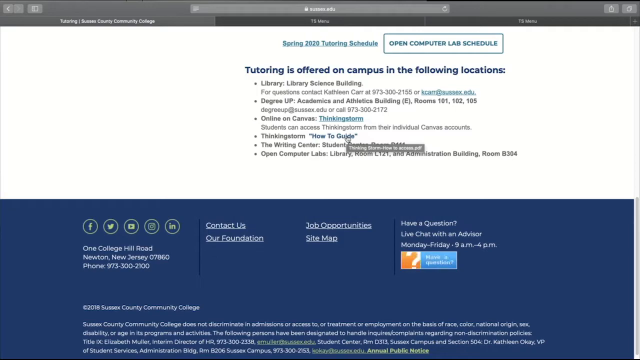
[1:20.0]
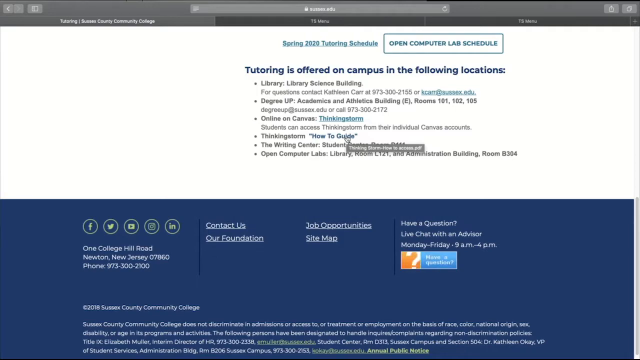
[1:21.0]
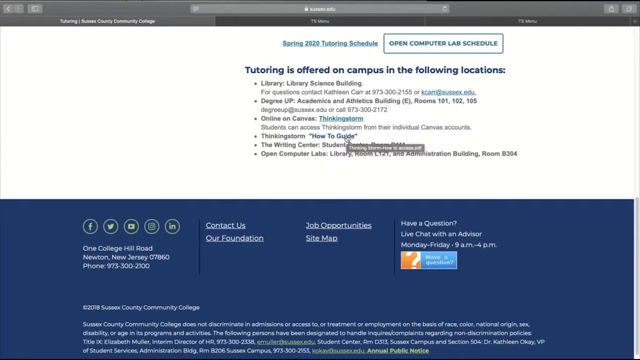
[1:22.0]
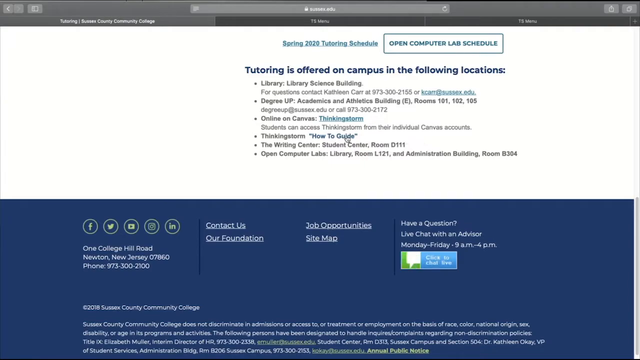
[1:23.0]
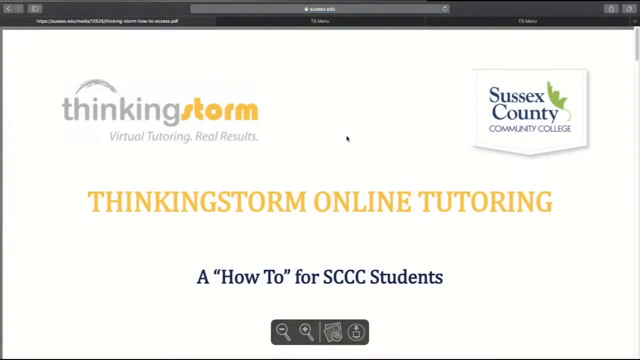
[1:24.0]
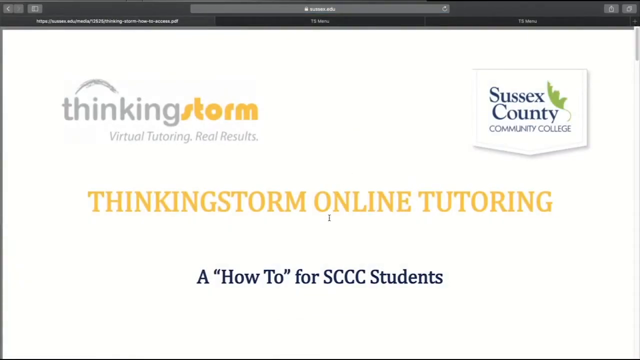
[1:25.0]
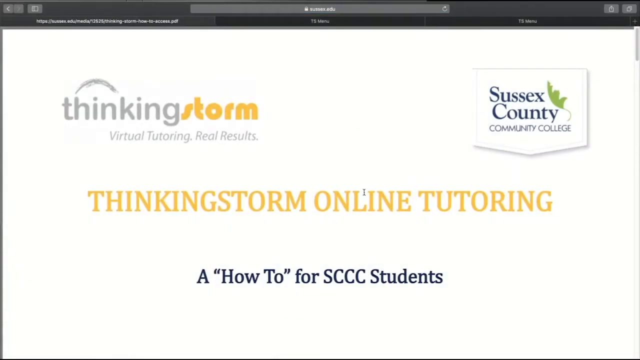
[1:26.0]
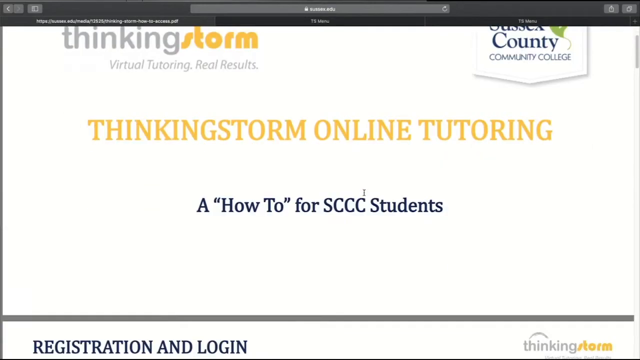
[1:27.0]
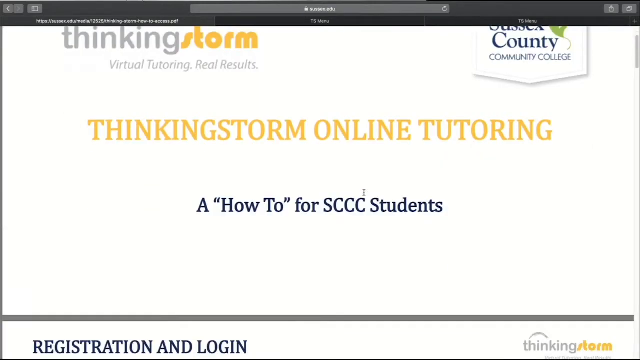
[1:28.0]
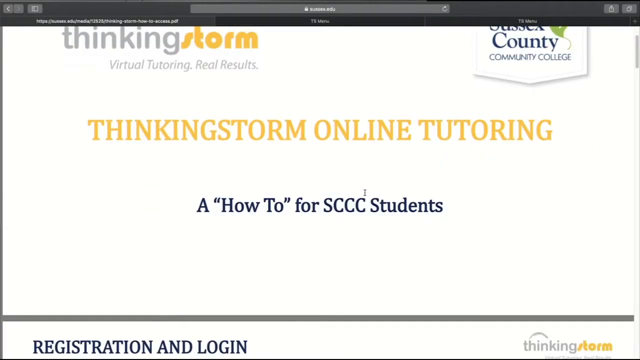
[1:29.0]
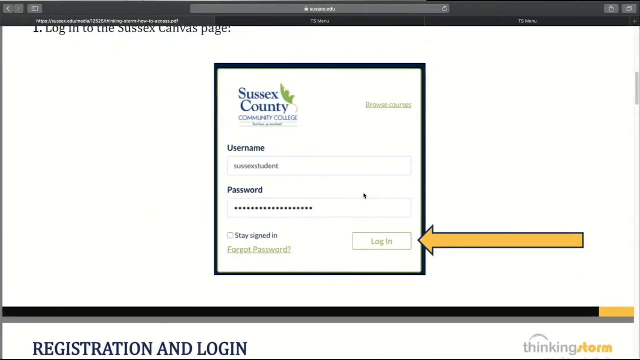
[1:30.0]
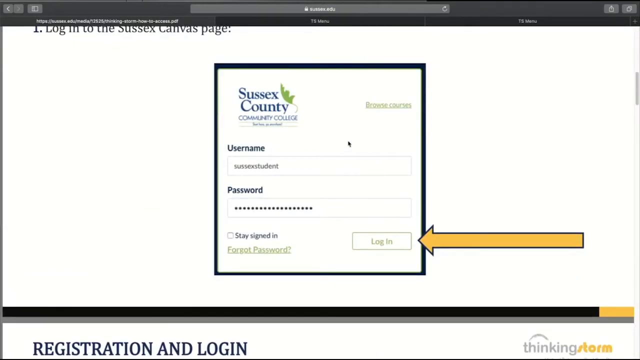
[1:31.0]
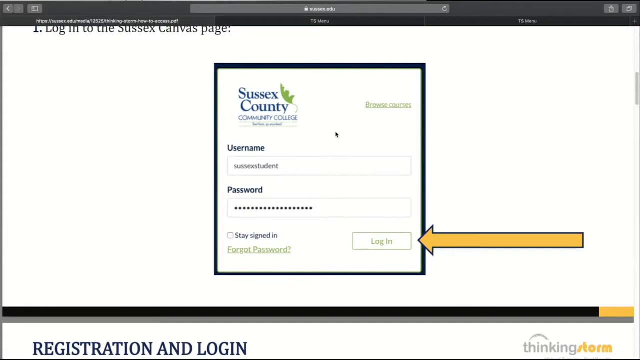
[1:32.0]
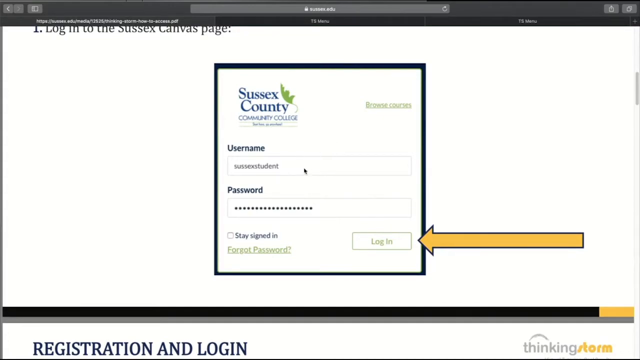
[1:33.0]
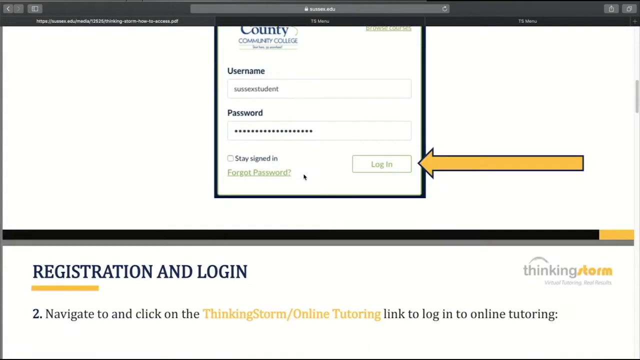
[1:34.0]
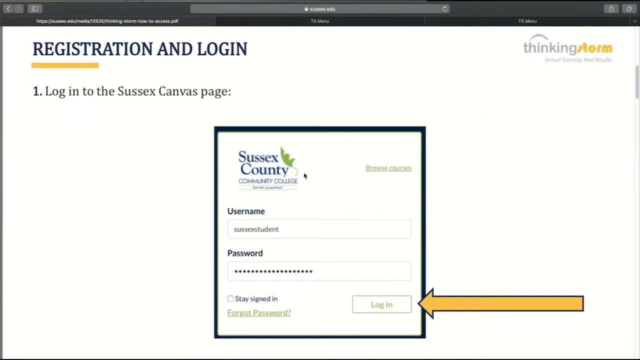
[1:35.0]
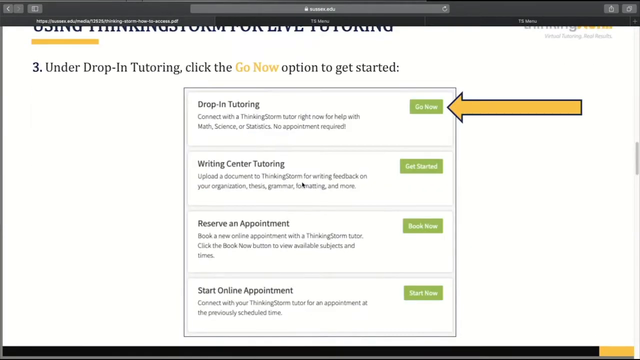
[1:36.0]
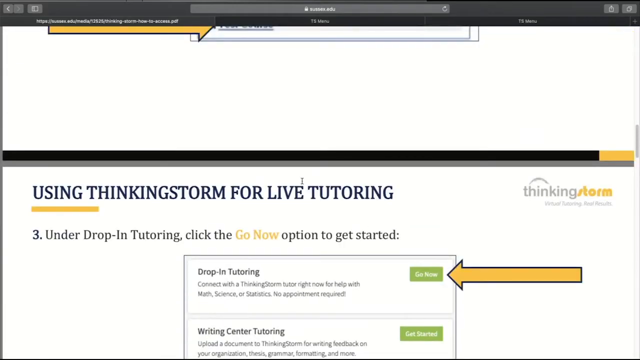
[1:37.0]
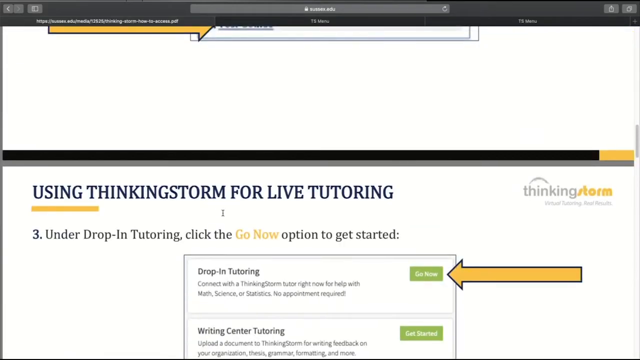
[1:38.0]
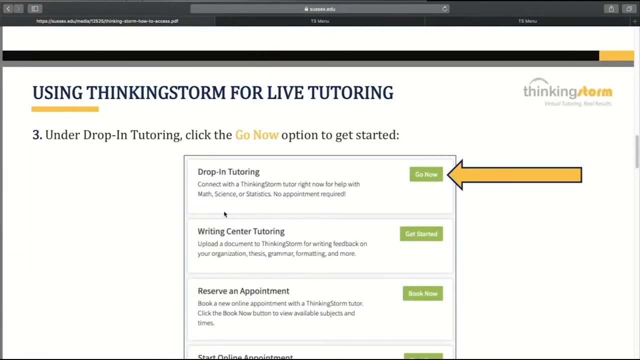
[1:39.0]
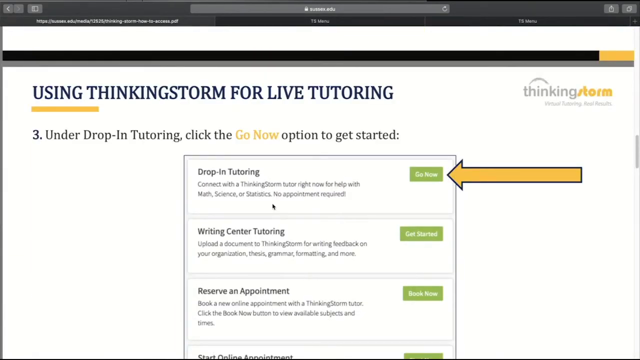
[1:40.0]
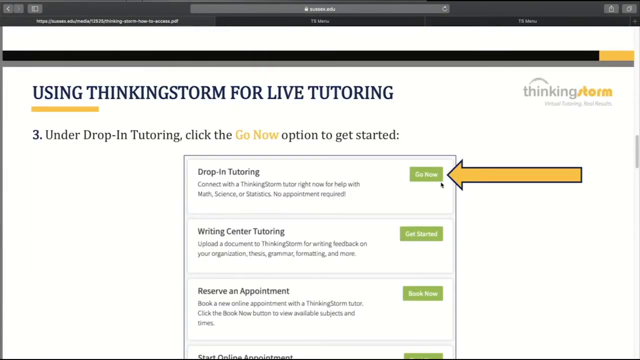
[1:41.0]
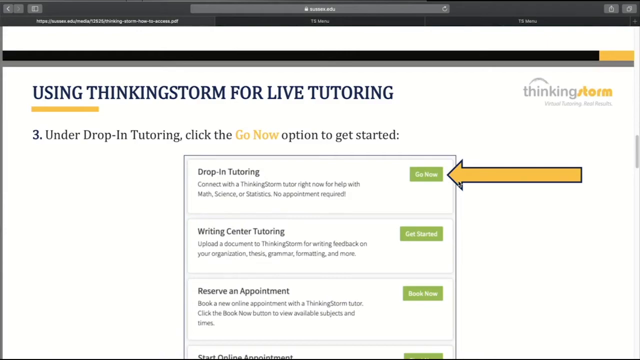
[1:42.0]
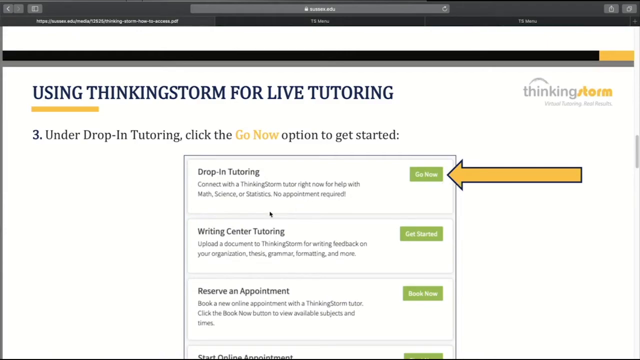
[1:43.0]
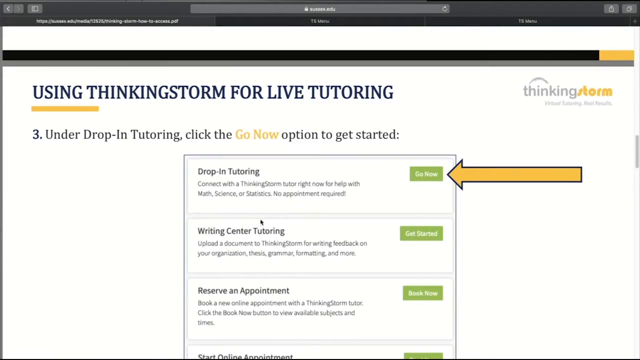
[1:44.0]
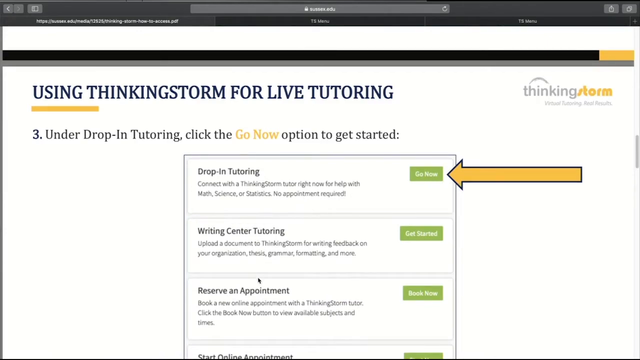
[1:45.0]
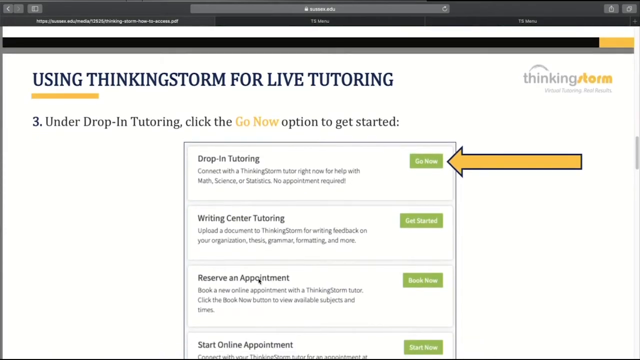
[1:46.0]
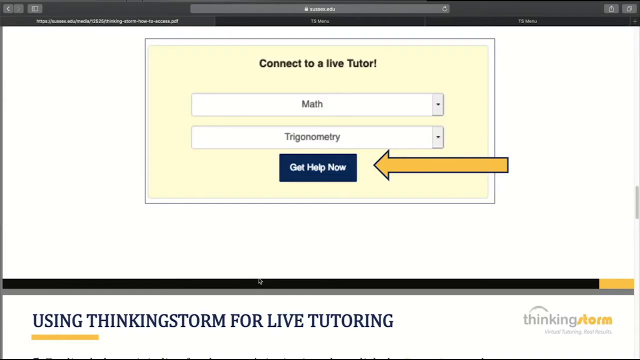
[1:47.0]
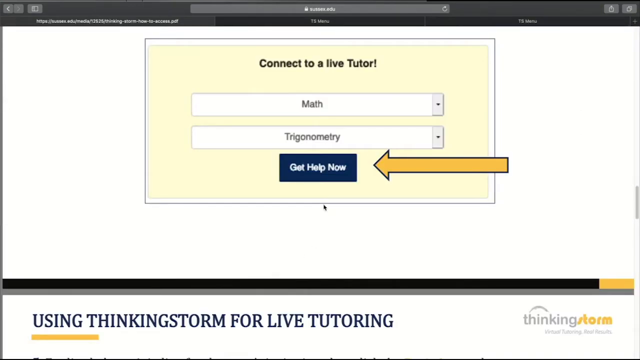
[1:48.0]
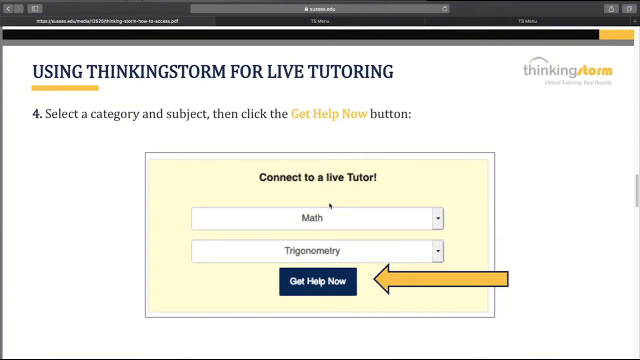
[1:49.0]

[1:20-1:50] A site called Sussex.edu, probably the site of a college in Sussex, shows a tab with a lot of information about where tutoring is offered on the college's campus. The cursor rests on a how-to guide for an app called ThinkingStorm, and the person using the page clicks on it. A ThinkingStorm online tutoring how-to for Sussex County Community College opens, probably a presentation showing how to log in. The next slide shows a screenshot of the site's login section. A slide then shows how to access drop-in tutoring on the ThinkingStorm site: after logging in and setting the category and subject, the user clicks a button called "Get Help Now" to be connected to a live tutor.